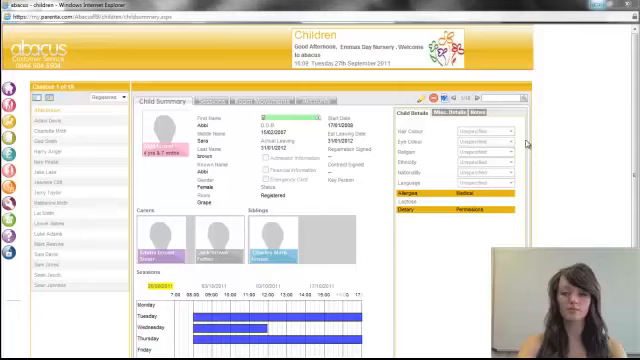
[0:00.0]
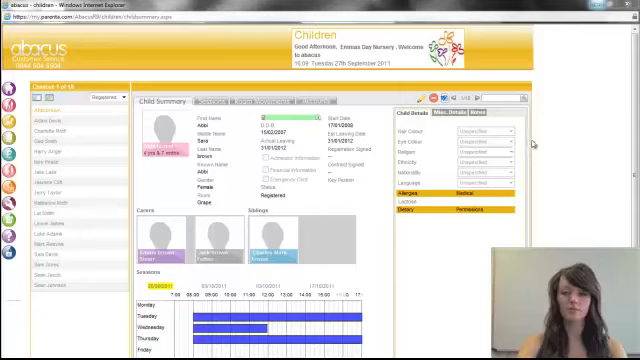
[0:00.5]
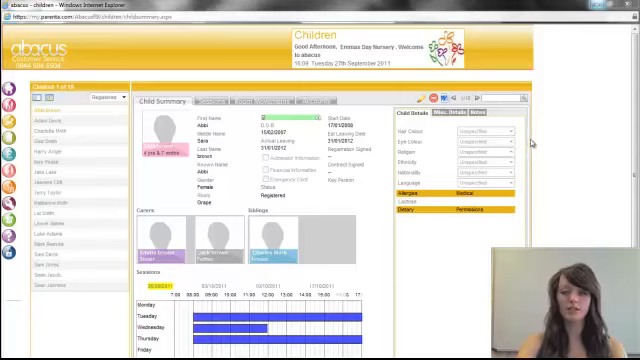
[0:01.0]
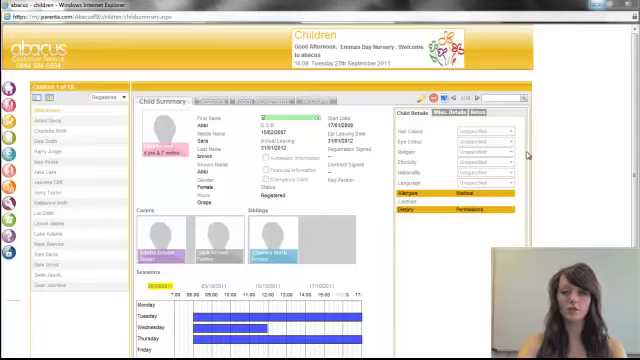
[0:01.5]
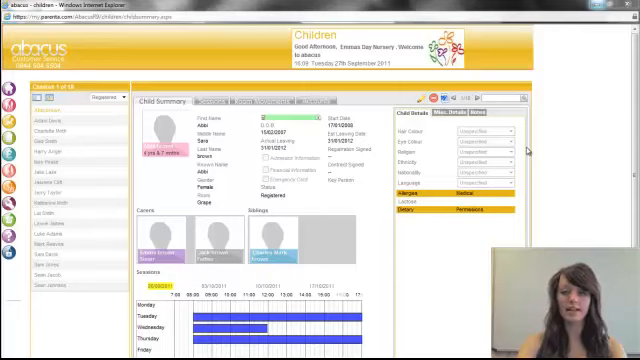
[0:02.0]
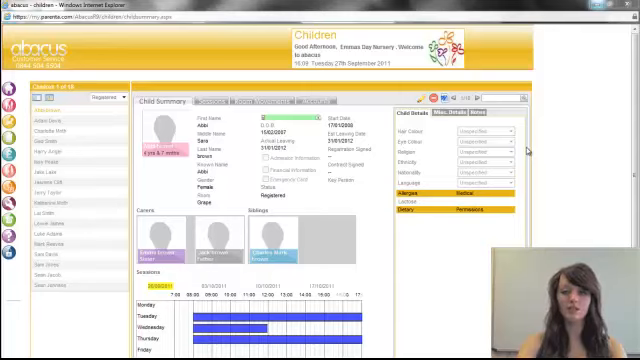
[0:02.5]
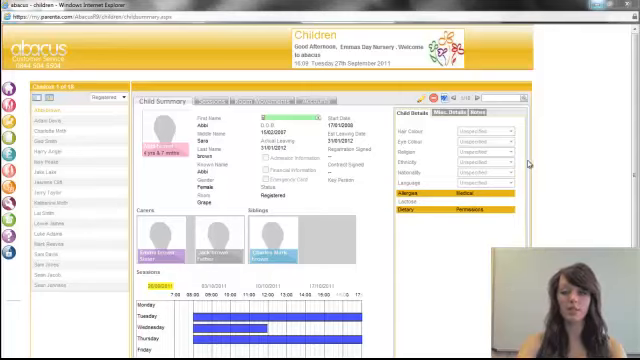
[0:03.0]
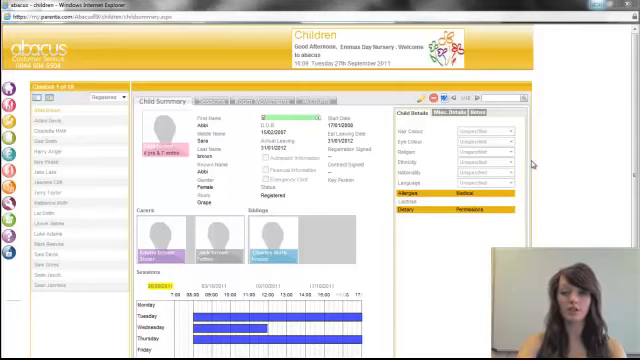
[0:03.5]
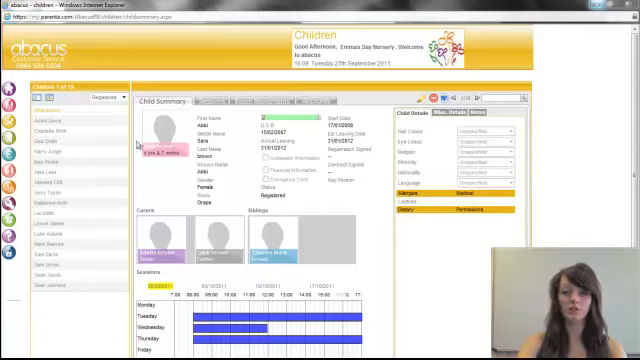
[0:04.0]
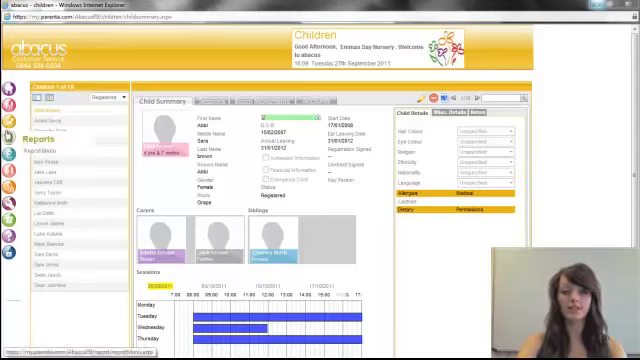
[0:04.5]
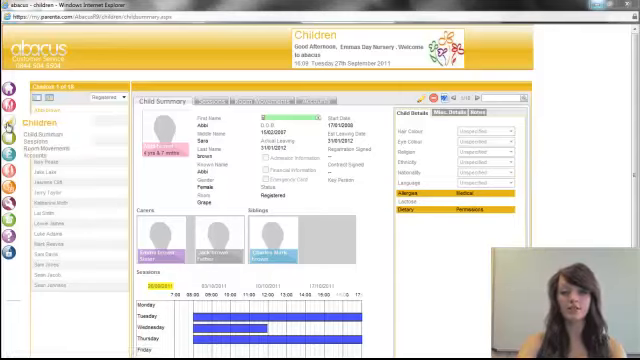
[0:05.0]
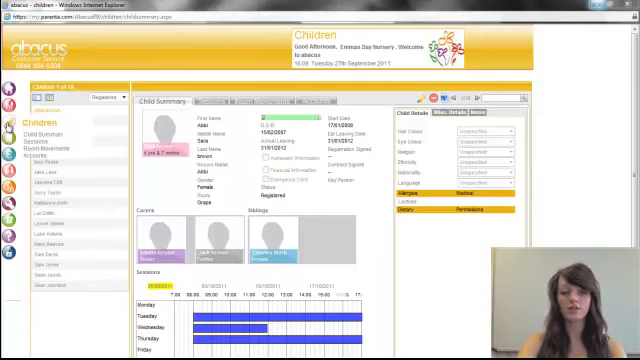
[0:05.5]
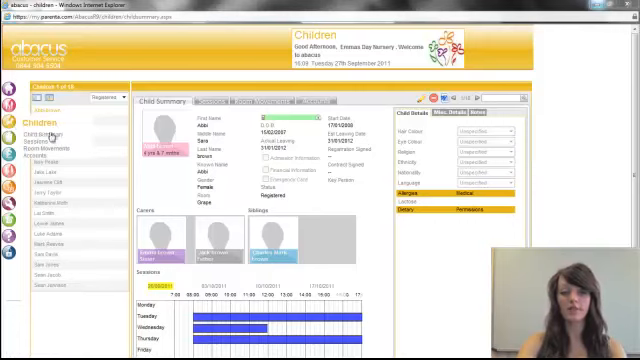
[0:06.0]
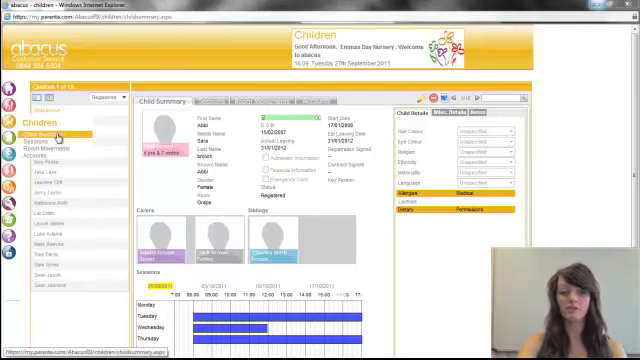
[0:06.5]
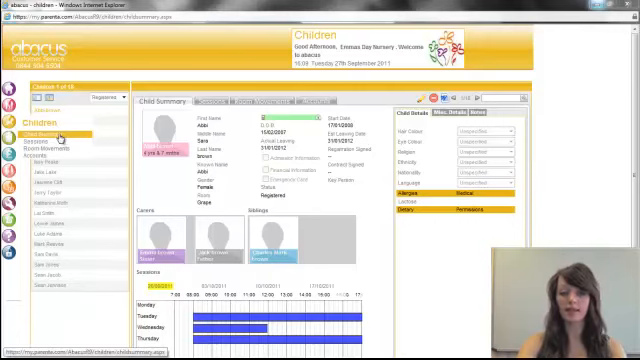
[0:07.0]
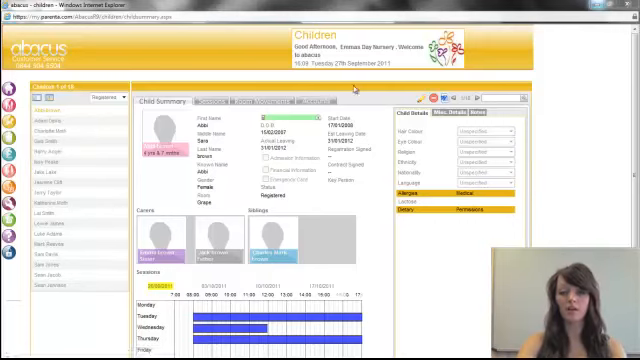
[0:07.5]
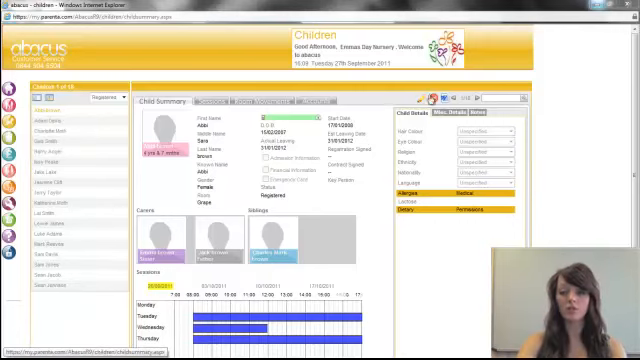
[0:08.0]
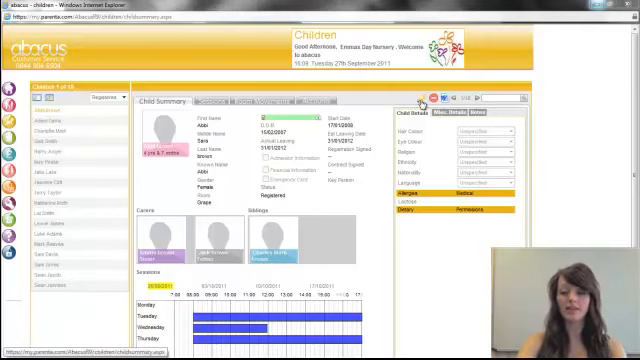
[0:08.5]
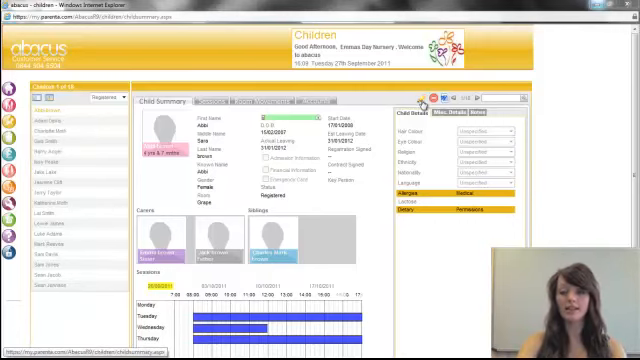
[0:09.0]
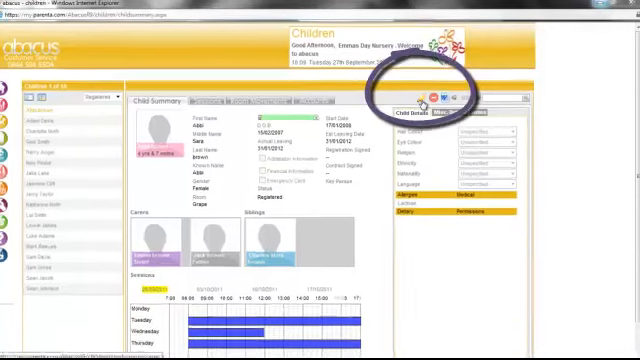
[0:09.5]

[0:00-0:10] A woman appears on the right side of the screen in what seems to be a tutorial for the Abacus website, a customer service site, opened in Internet Explorer. The website is MyParents.com and looks very old. The video was recorded on 27th September 2011. She is on the Child Summary page, doing something on the site, and moves the mouse onto an icon that appears to be a pencil.